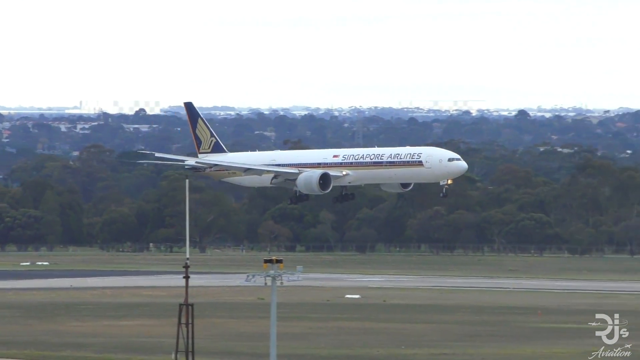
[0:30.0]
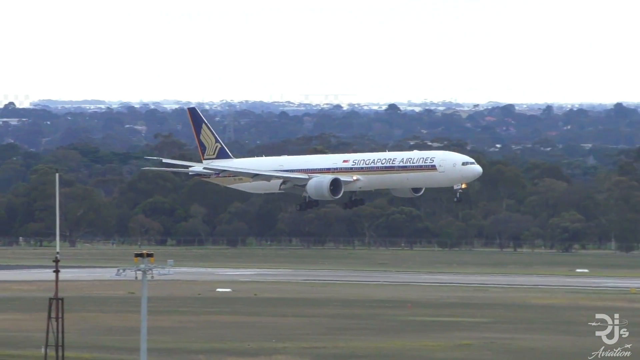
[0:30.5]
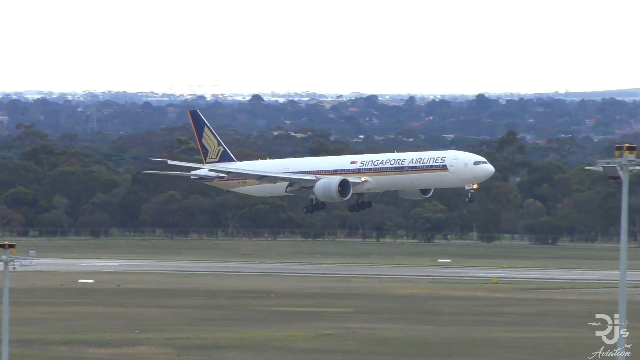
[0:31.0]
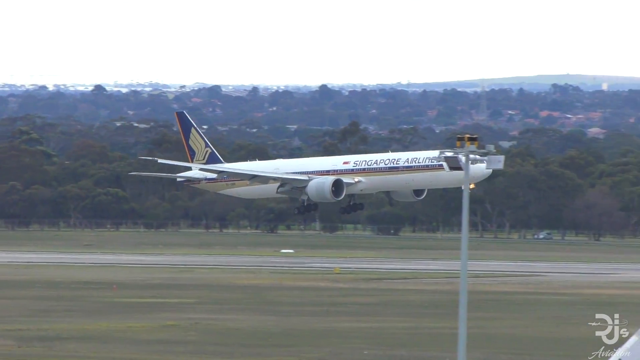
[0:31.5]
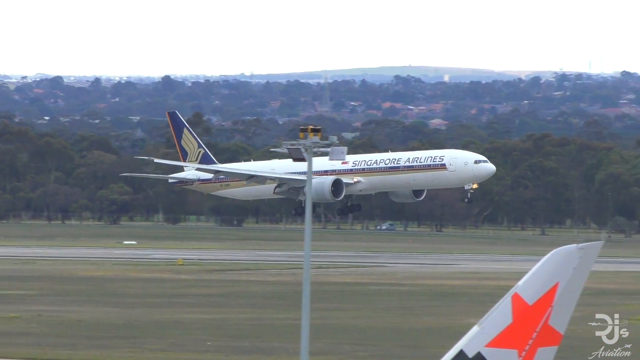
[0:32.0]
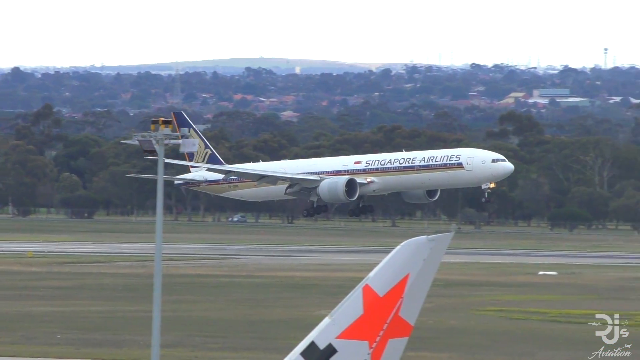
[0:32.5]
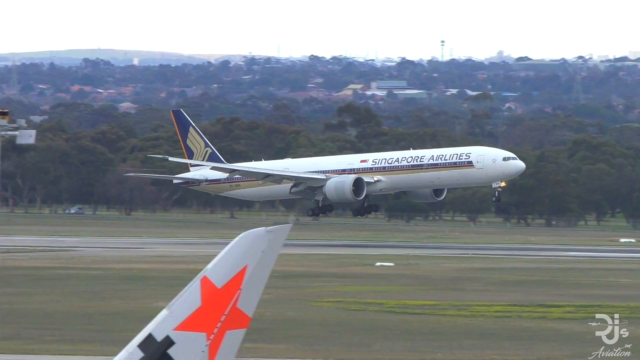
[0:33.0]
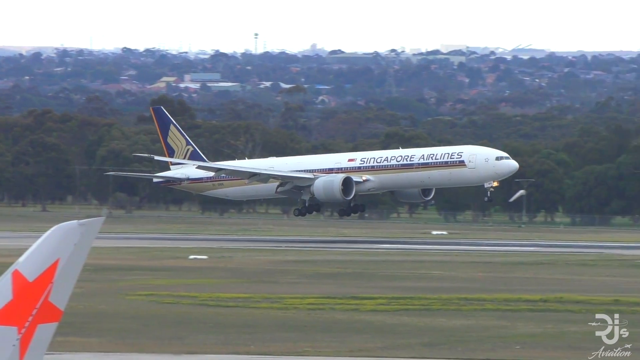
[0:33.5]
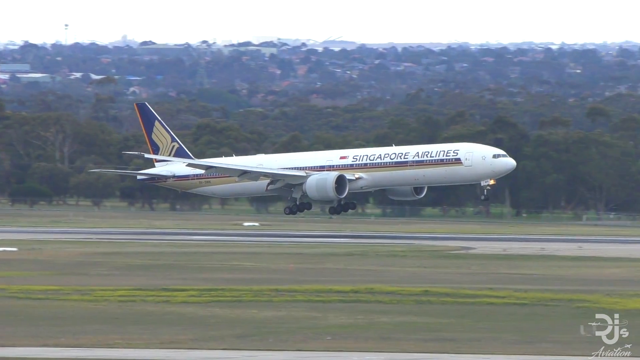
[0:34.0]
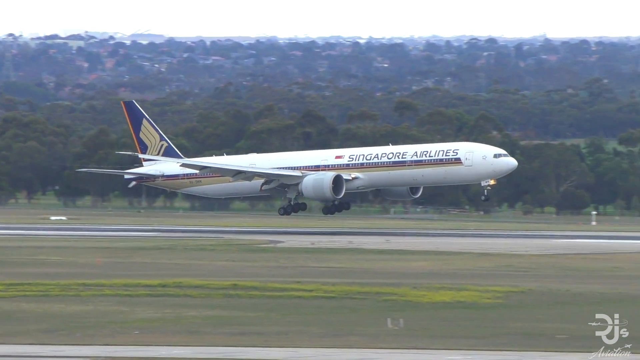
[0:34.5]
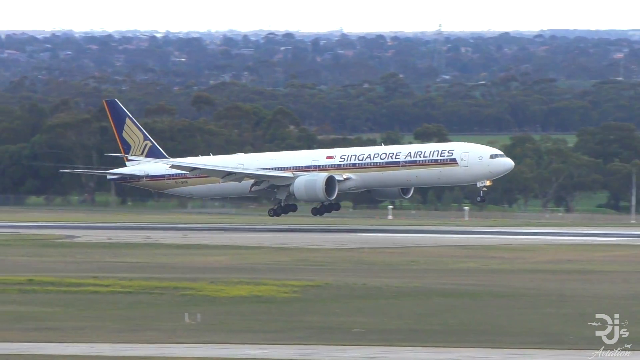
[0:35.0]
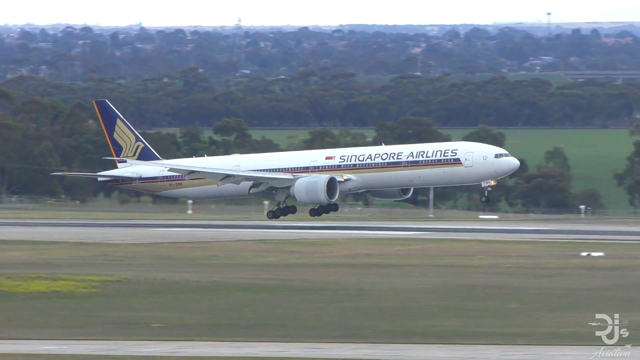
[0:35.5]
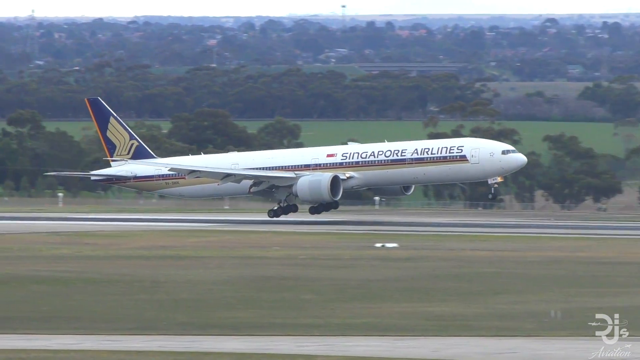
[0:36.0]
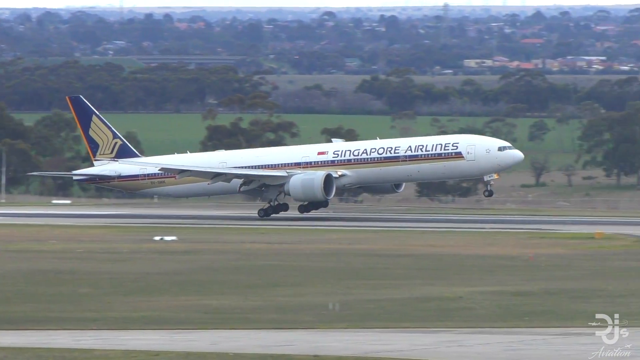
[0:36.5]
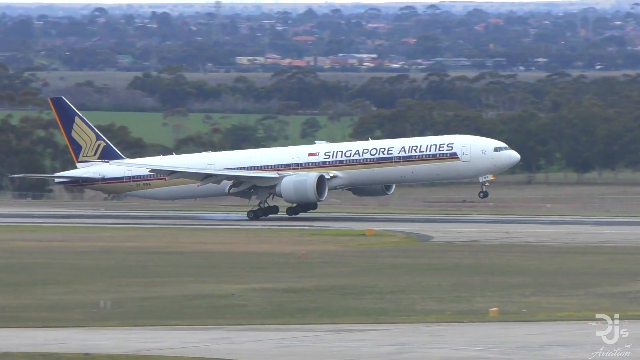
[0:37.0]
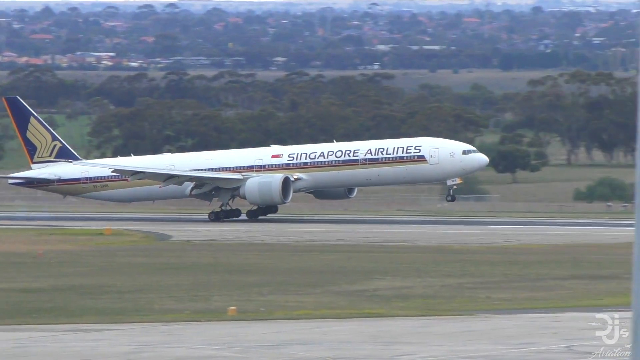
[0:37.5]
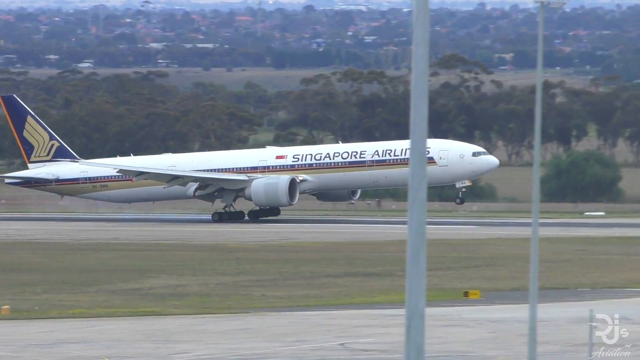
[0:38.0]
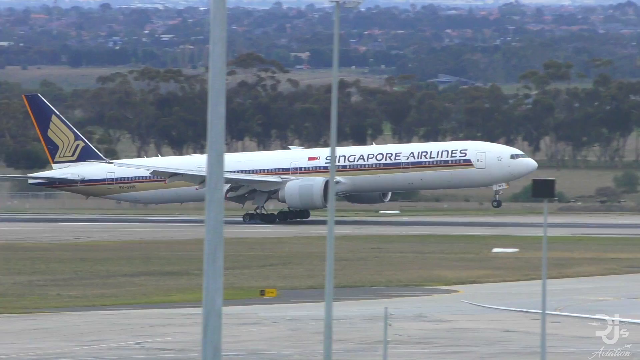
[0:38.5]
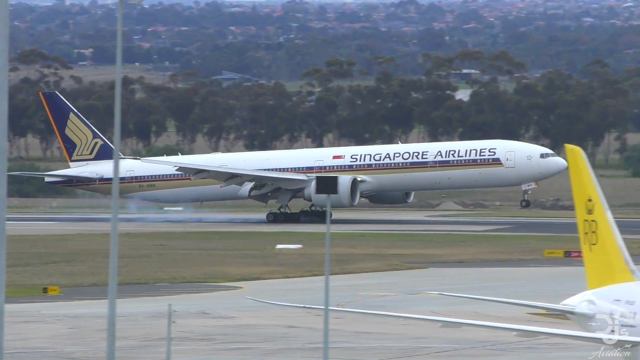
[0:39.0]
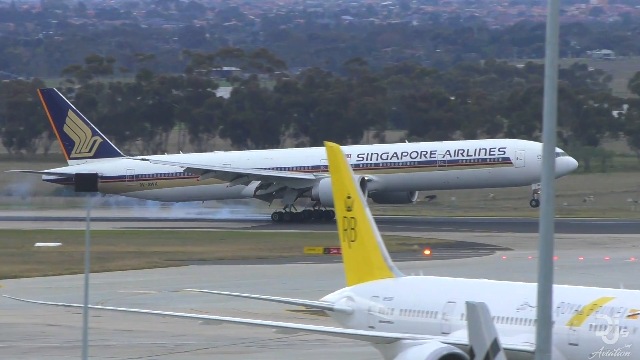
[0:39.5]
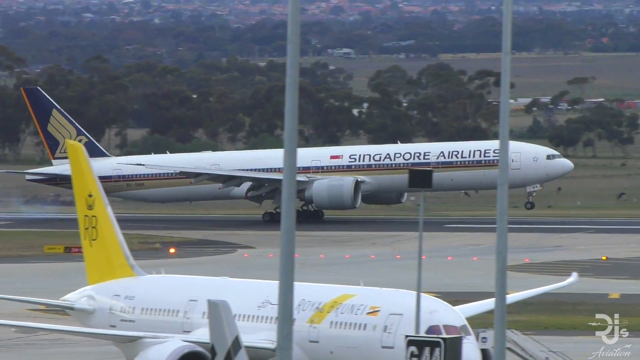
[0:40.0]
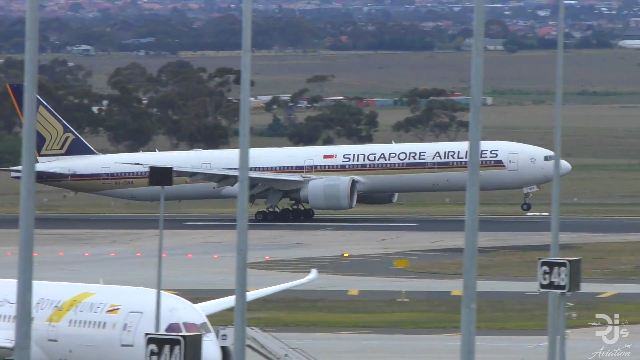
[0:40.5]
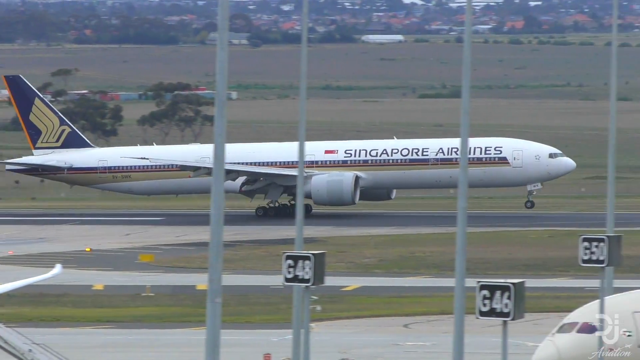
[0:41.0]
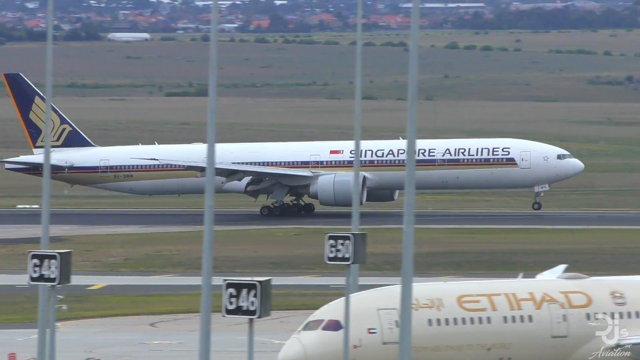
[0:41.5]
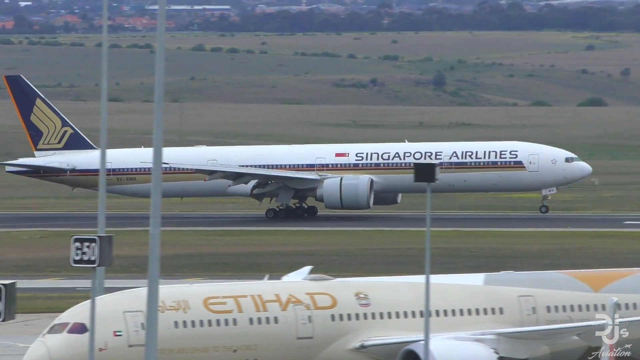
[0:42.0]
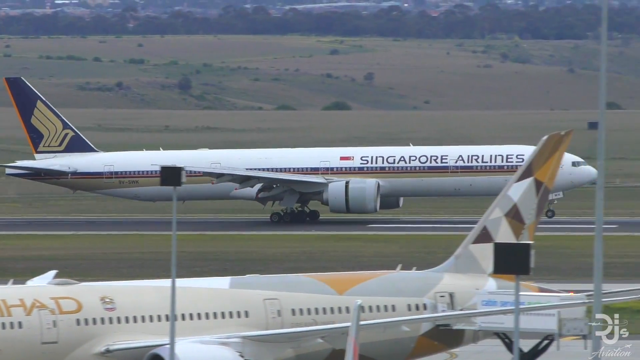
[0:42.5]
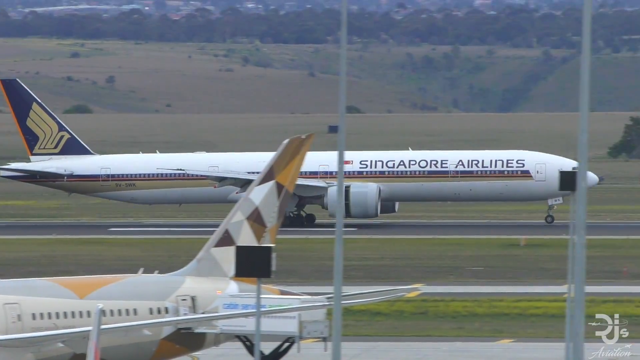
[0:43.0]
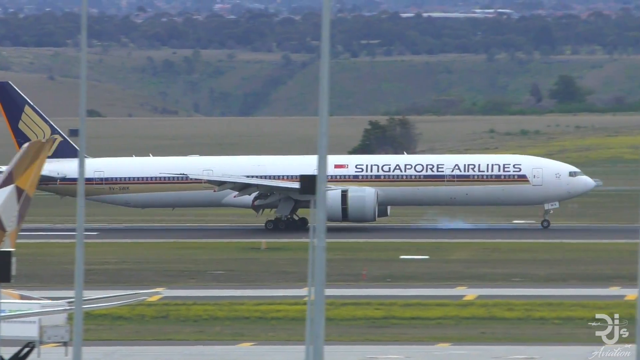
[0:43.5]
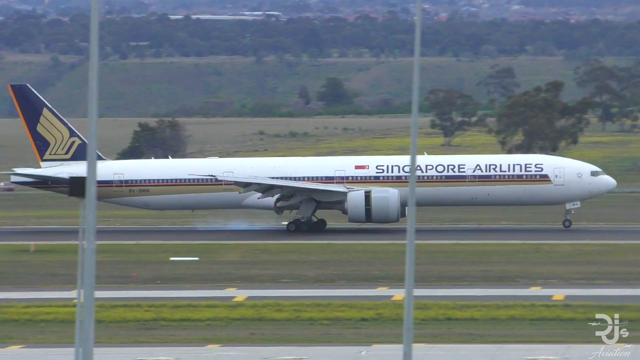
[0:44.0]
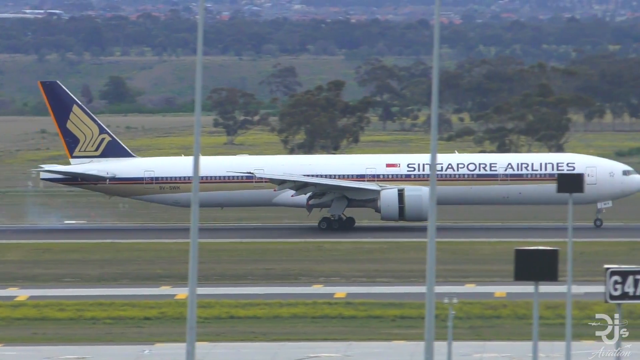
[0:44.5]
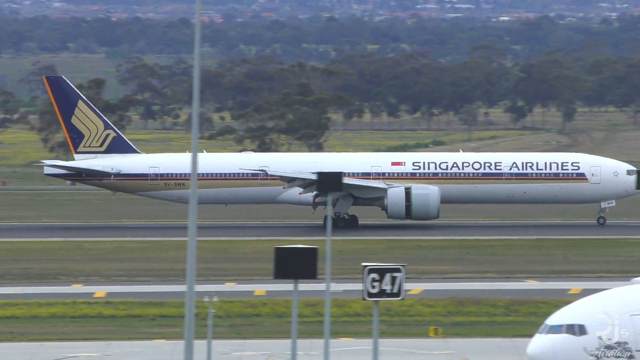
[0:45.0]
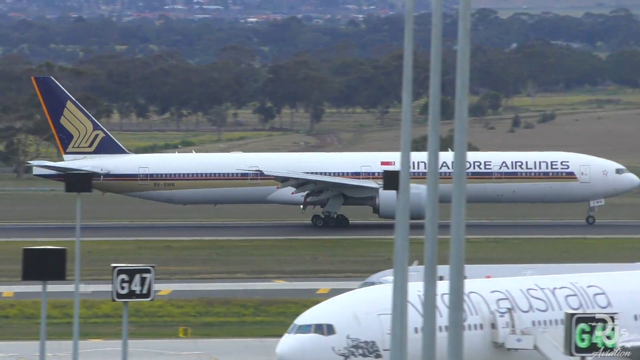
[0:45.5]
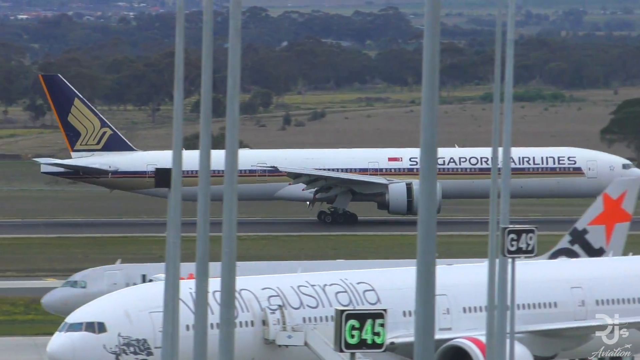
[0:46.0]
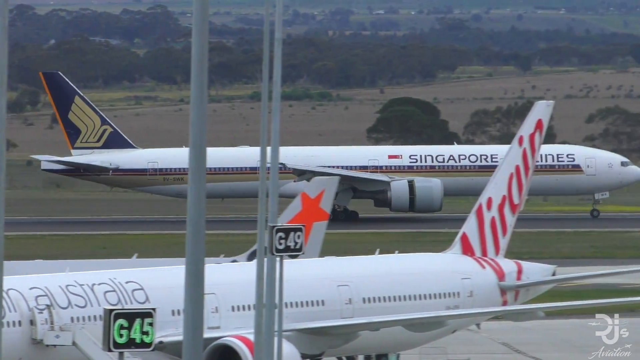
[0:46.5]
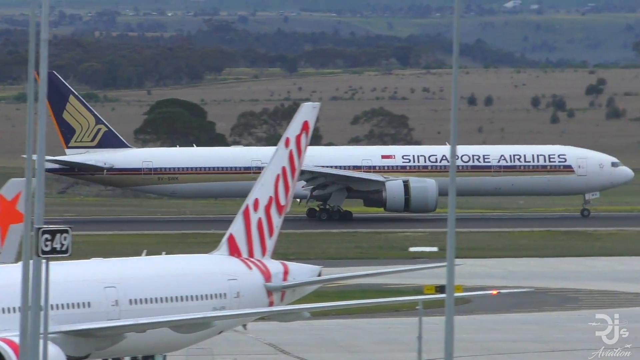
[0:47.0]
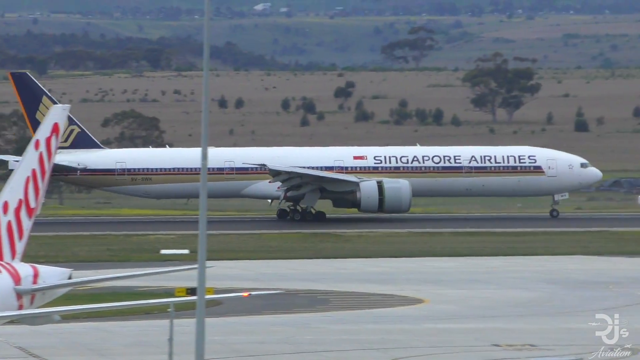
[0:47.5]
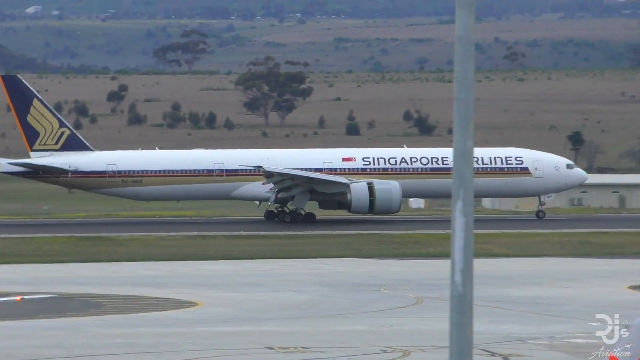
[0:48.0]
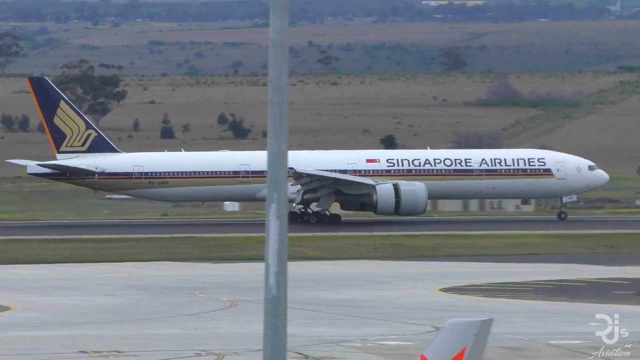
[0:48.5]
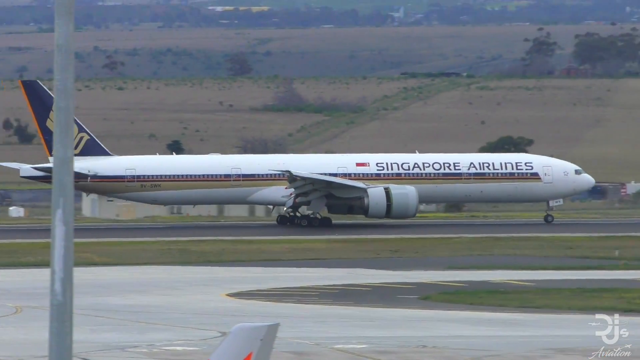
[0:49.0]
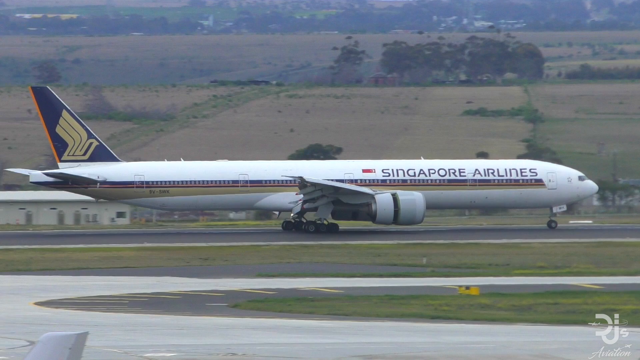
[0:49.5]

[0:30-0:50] A large white passenger jet with "Singapore Airlines" on its side lands at an airport. It has two jet engines, one on either wing, and touches down on the runway. Behind it, houses and a city are visible in the distance, and a couple of patches of trees are along the runway. The plane lands and comes to a stop. Some other planes in the area appear to be stationary, and one in motion looks like it might be taxiing to a different part of the runway.